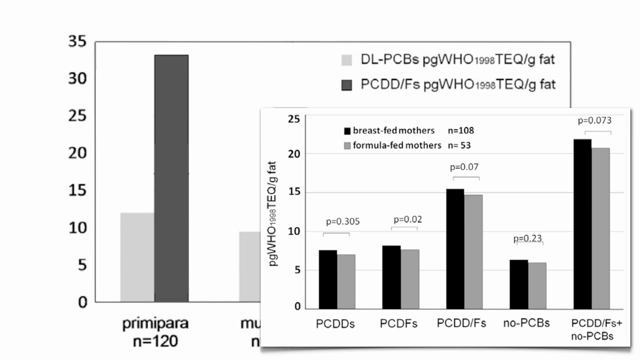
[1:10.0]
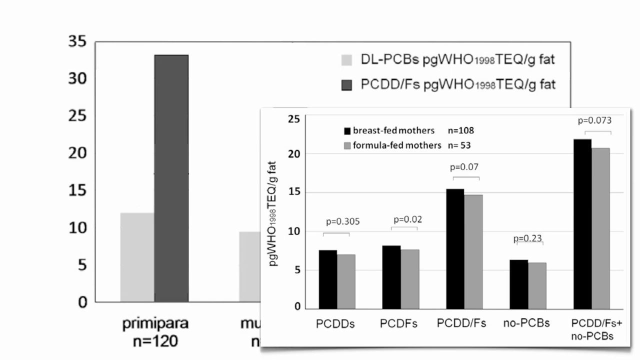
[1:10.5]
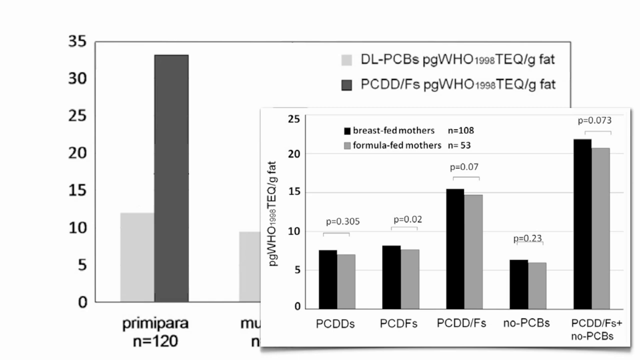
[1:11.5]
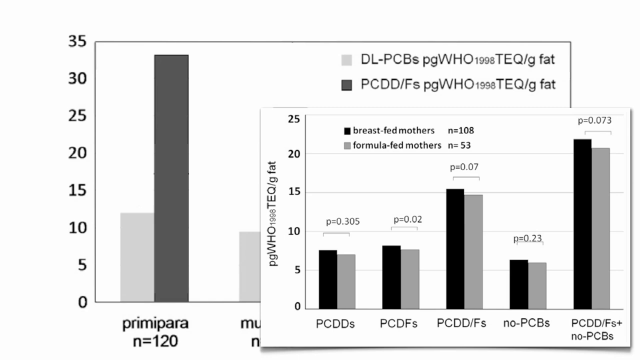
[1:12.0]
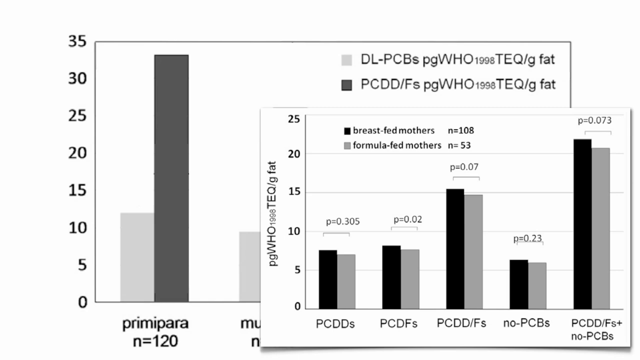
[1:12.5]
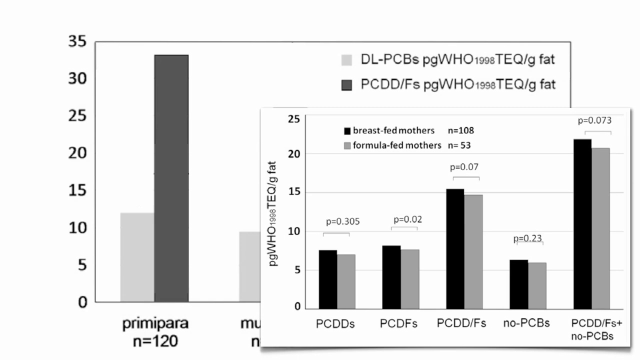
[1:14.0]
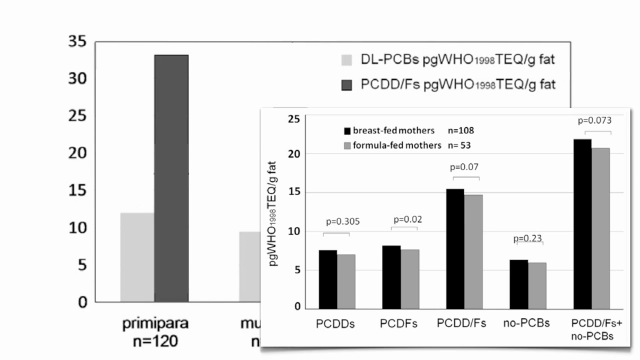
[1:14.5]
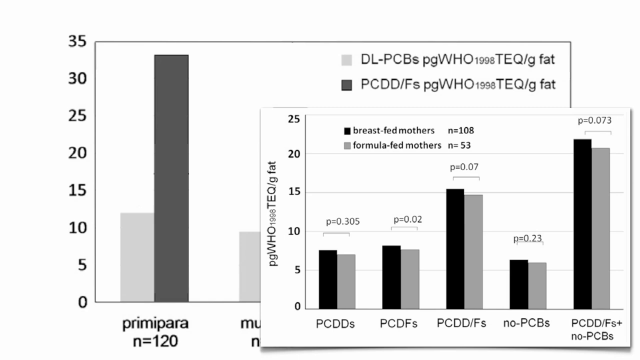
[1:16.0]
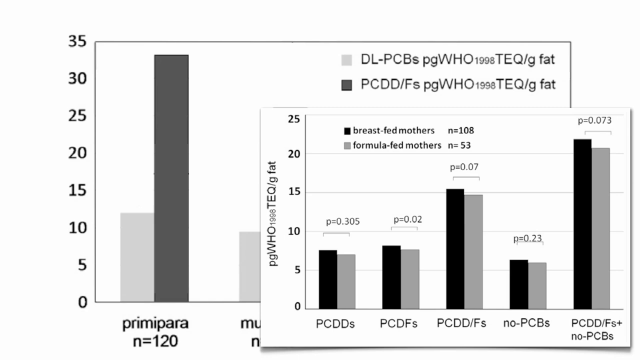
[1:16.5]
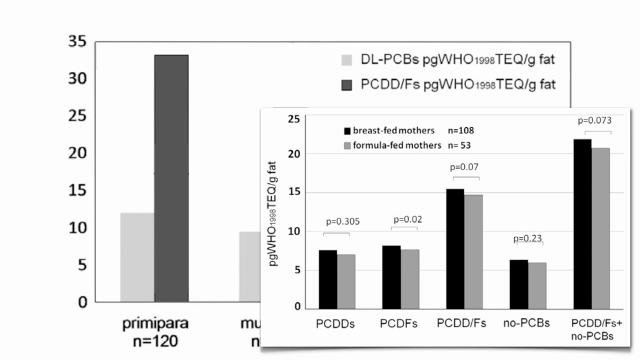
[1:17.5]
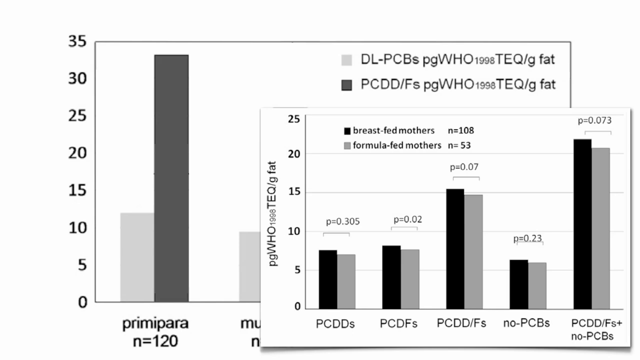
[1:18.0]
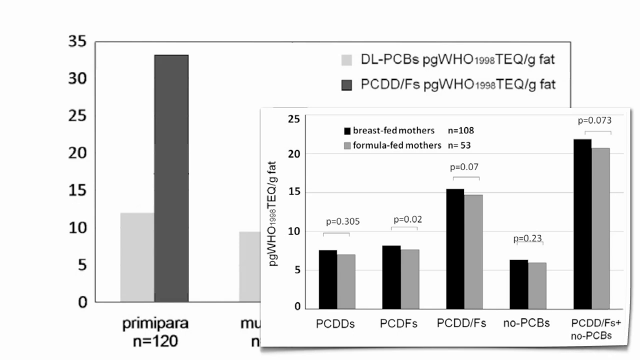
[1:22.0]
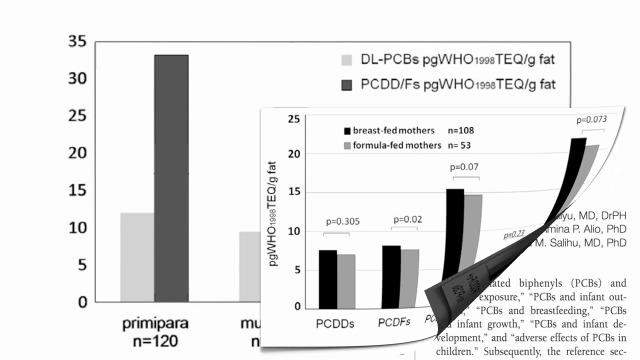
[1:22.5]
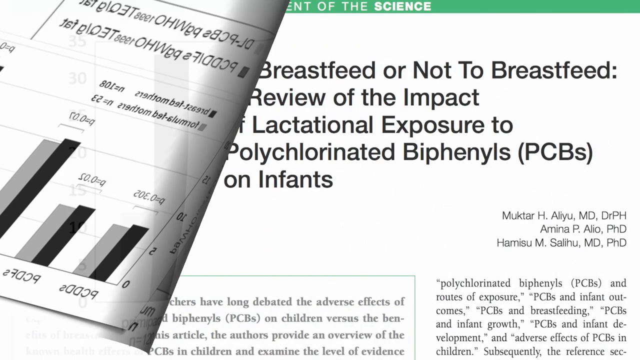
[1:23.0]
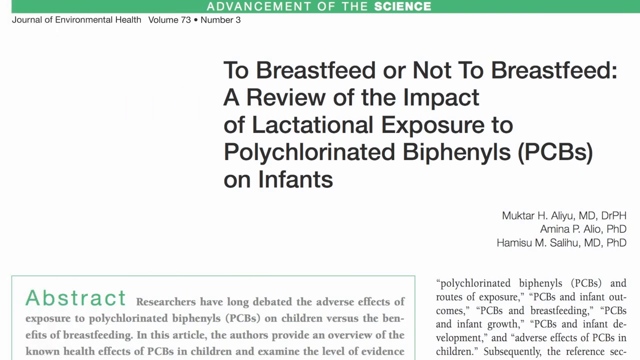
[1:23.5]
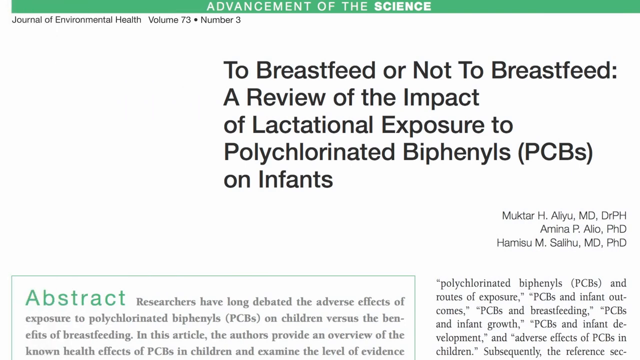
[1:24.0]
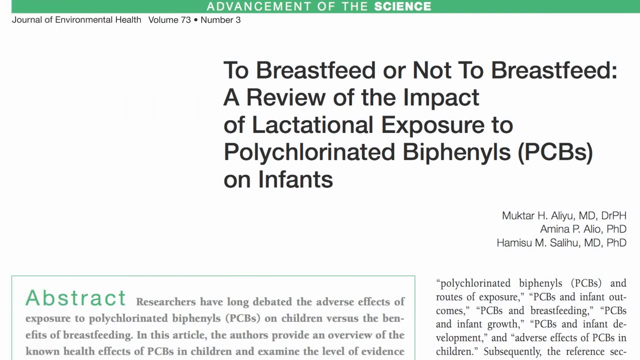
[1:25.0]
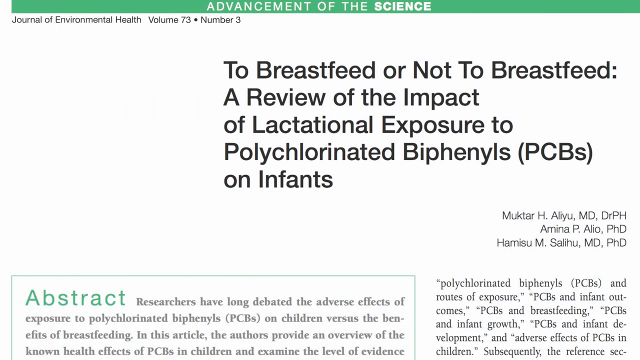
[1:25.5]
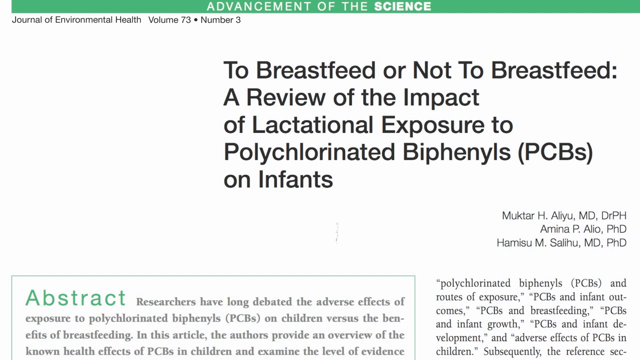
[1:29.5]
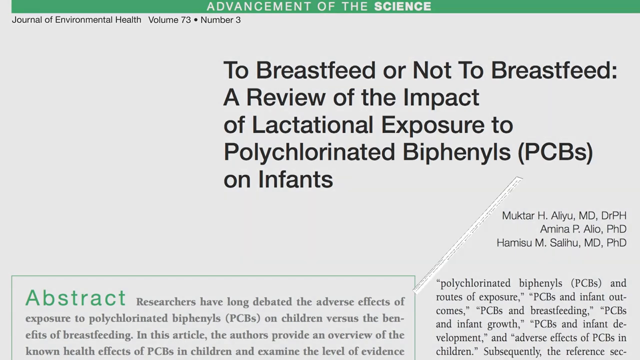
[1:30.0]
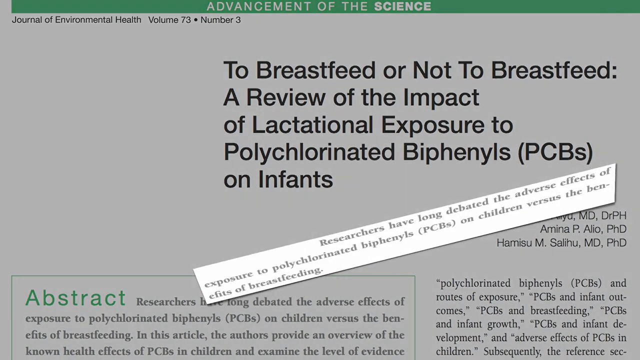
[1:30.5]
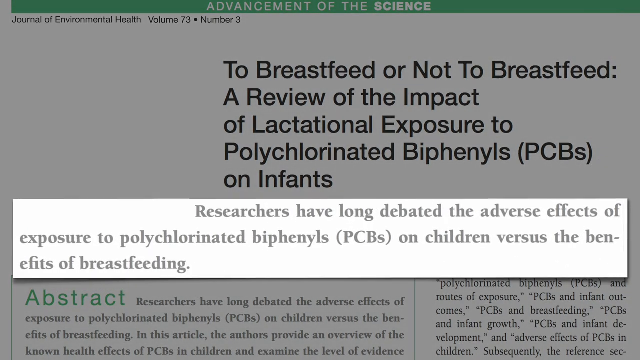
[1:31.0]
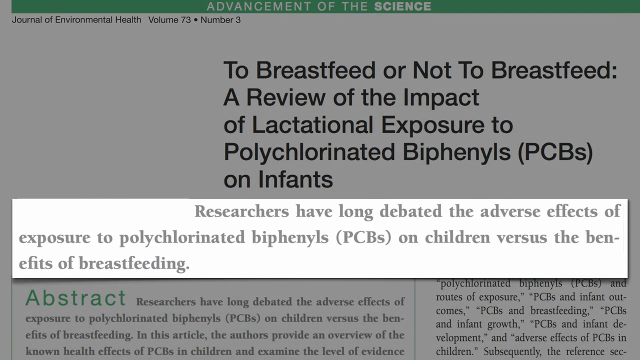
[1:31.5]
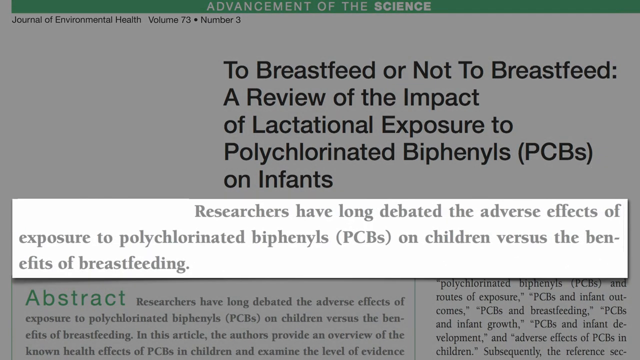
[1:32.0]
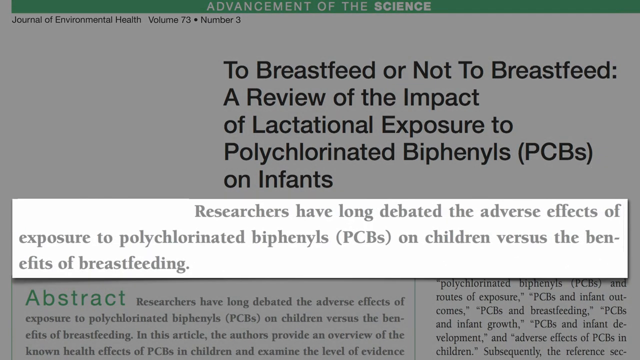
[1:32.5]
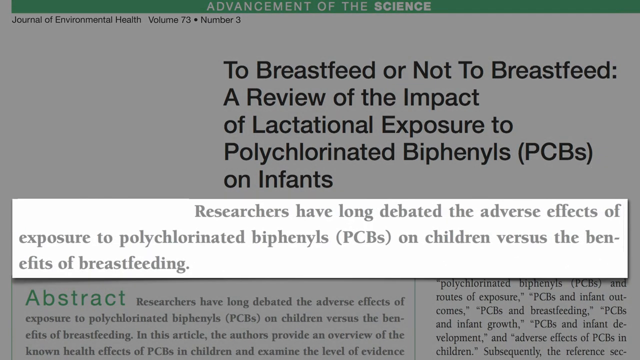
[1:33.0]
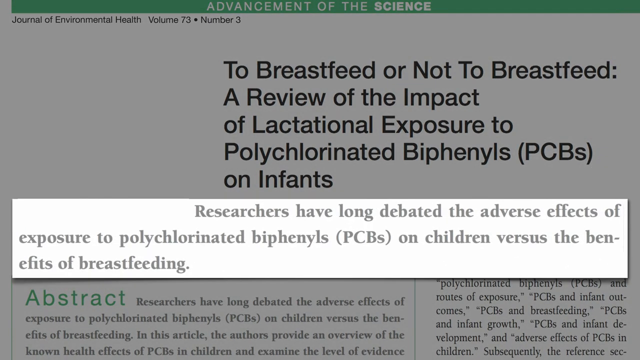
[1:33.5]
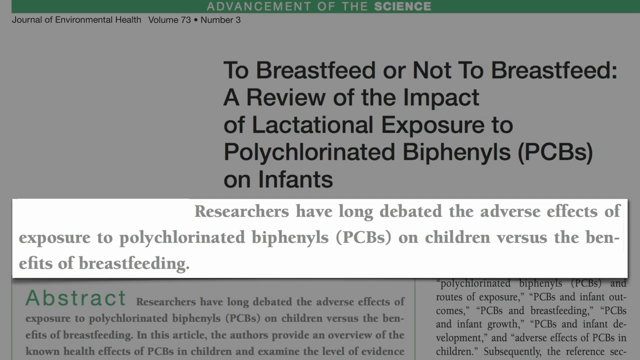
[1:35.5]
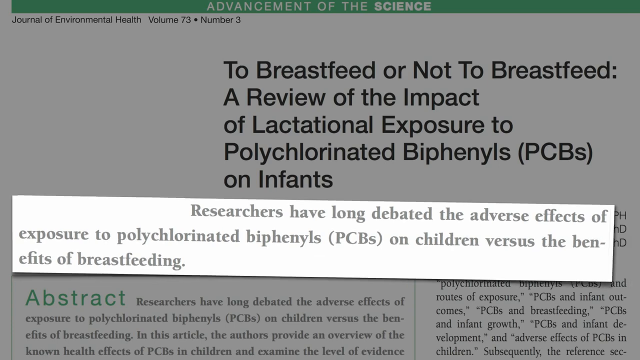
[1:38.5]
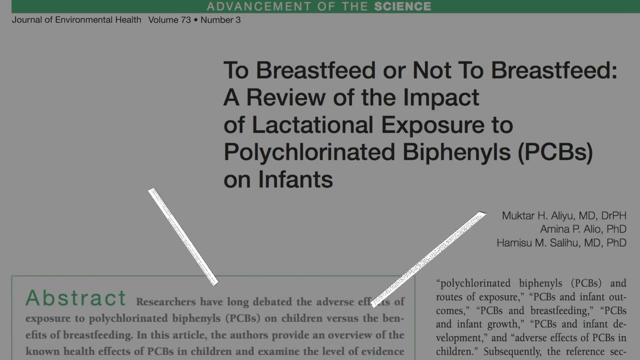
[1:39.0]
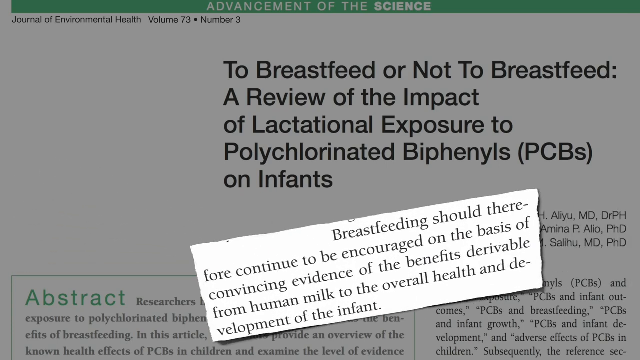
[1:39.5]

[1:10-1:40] A black-and-white graph is shown. At the top is a black square with "breast fed mothers" to its right, and beneath it a light gray square with "formula fed mothers" to its right. The axis starts at zero at the bottom, with five horizontal lines above it numbered 5, 10, 15, 20 and 25. To the right of the numbers are black bars and gray bars standing vertically side by side. Beneath the first bars it says "PC DDS," beneath the second "PC DFS," and beneath the third "PC D DFS," with further labels under the fourth and fifth. It then cuts to a white screen with "to breastfeed or not to breastfeed. A review of the impact of lactational exposure to polychlorinated biphenyls on infants" at the top.